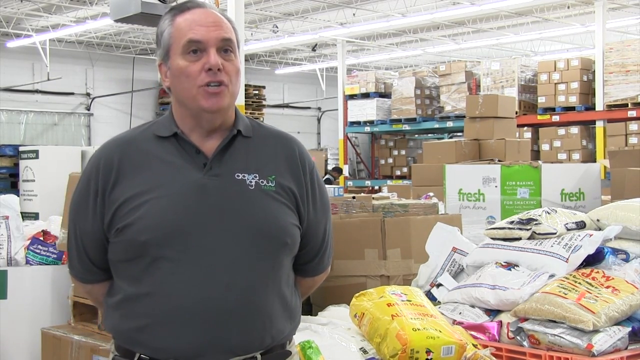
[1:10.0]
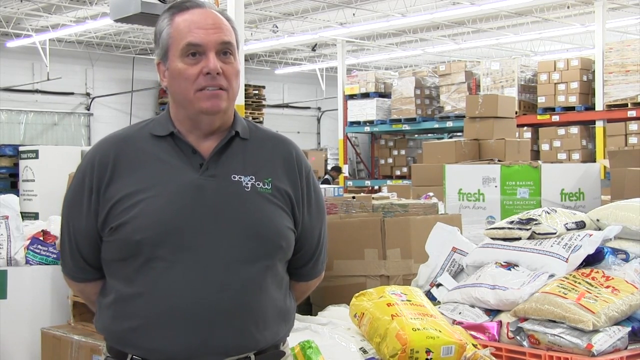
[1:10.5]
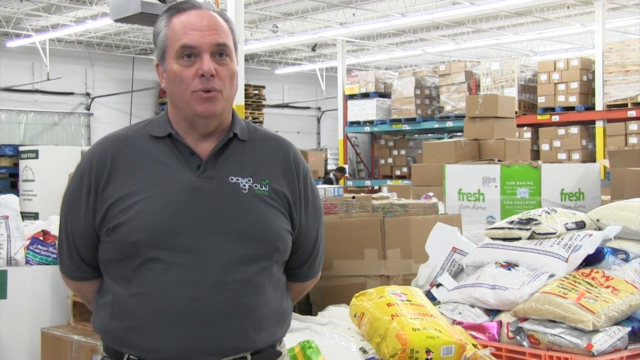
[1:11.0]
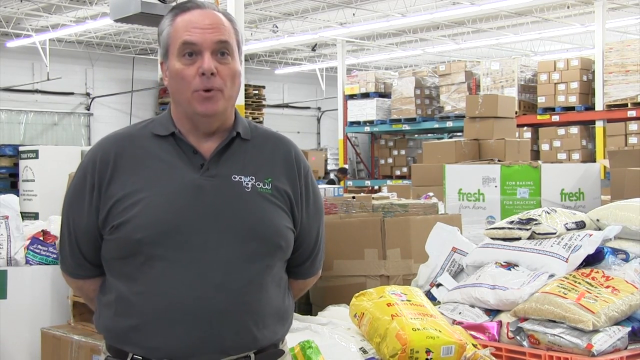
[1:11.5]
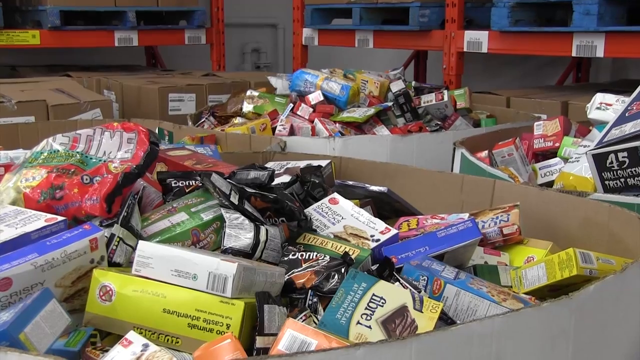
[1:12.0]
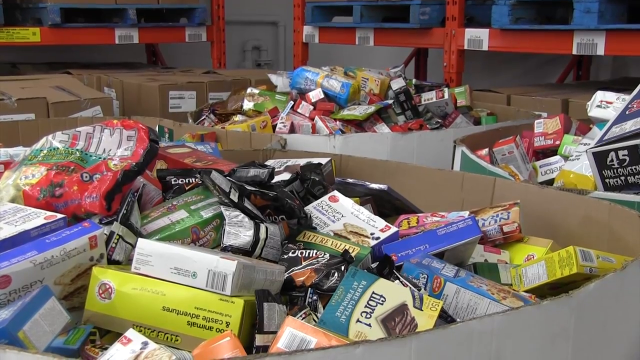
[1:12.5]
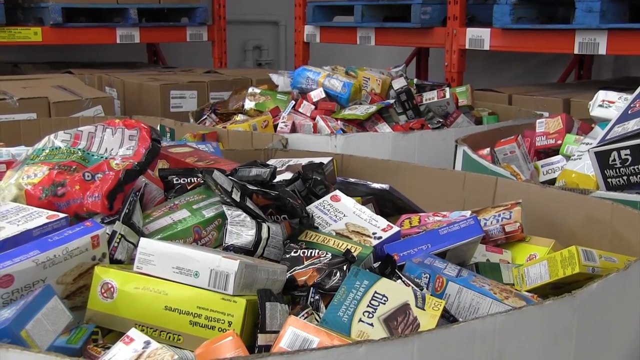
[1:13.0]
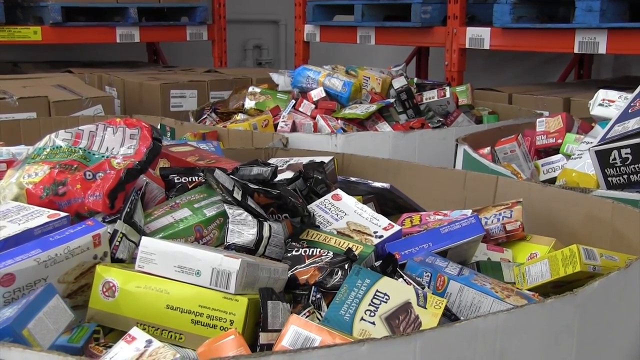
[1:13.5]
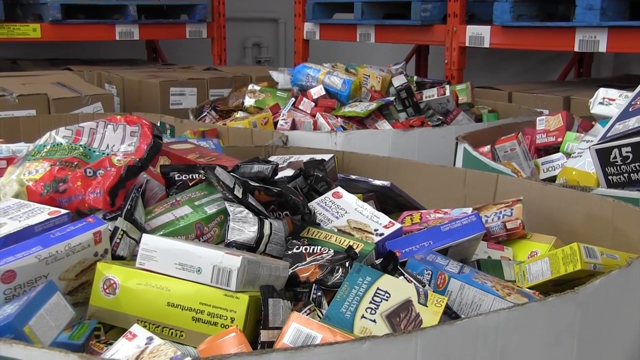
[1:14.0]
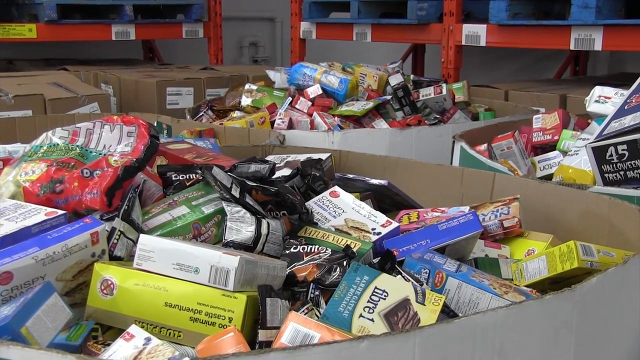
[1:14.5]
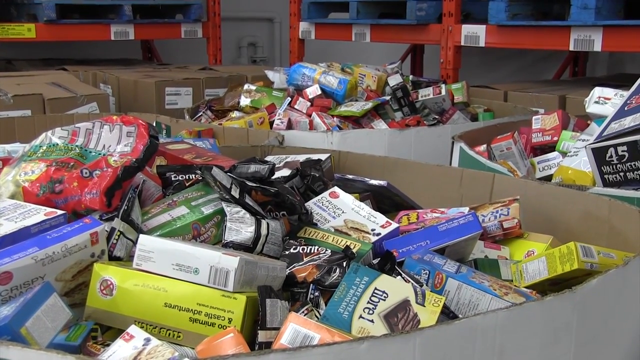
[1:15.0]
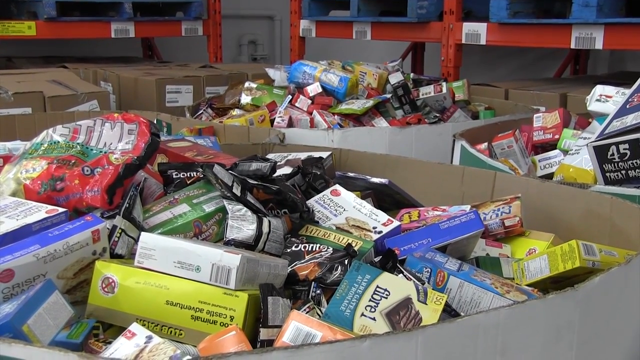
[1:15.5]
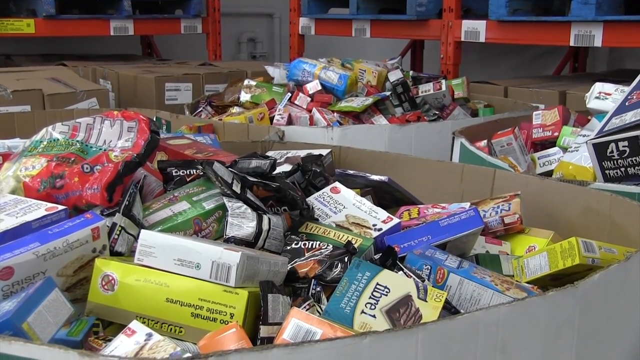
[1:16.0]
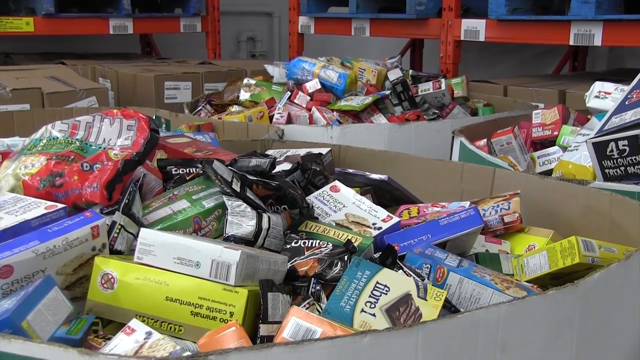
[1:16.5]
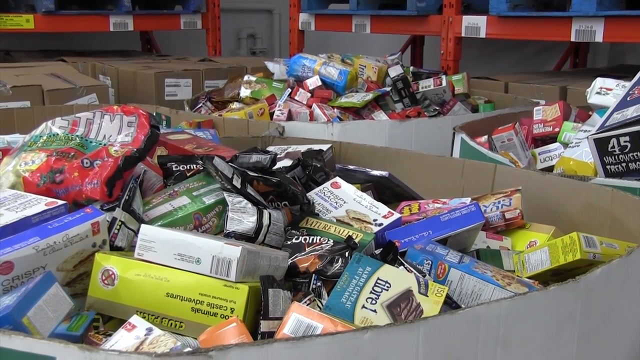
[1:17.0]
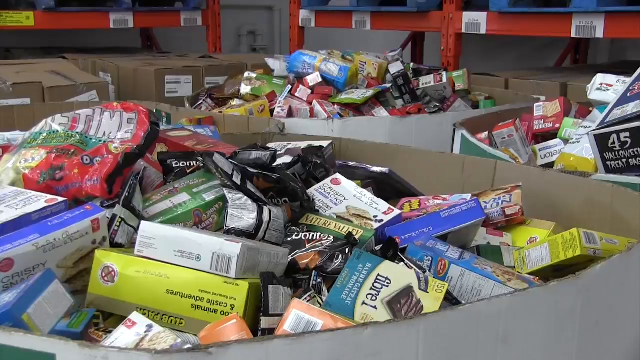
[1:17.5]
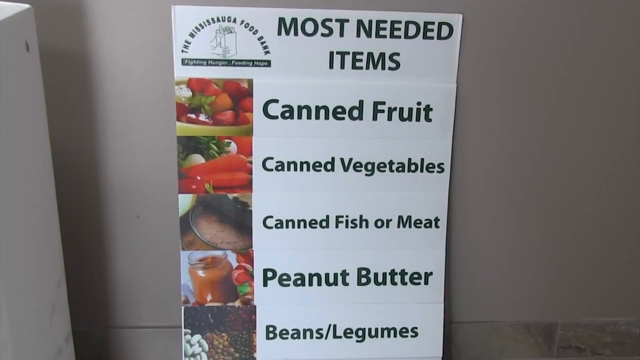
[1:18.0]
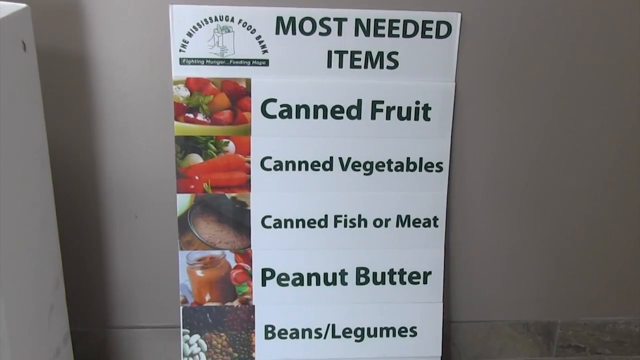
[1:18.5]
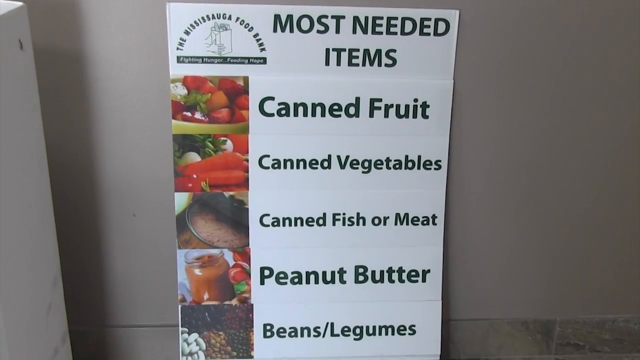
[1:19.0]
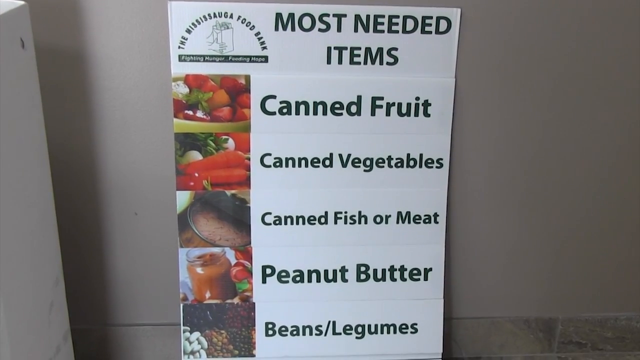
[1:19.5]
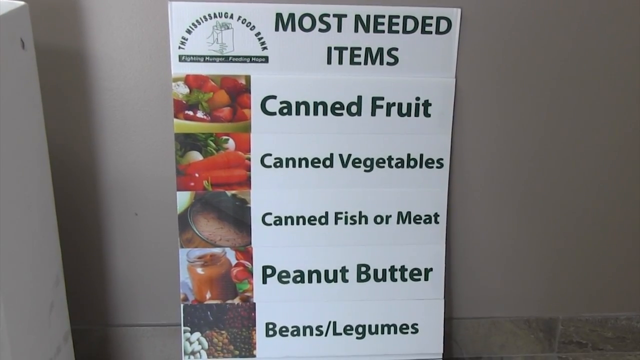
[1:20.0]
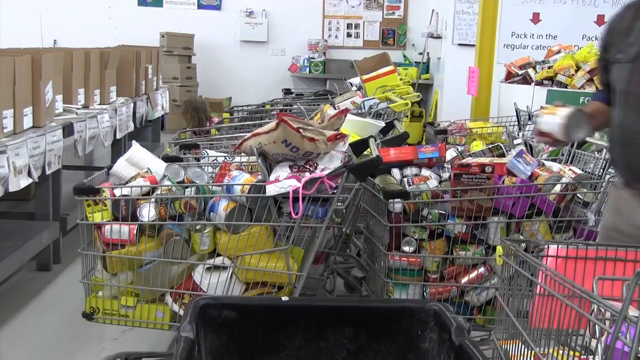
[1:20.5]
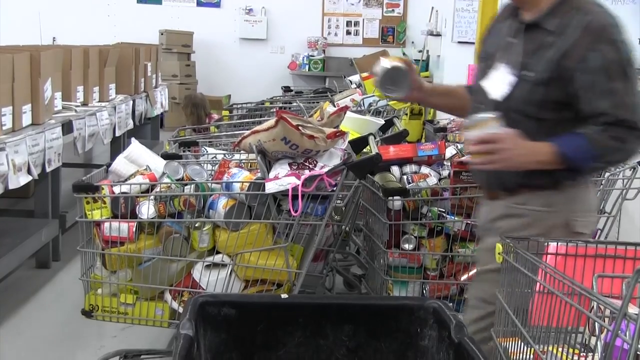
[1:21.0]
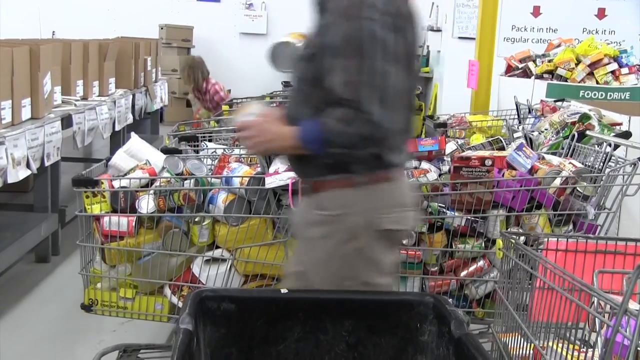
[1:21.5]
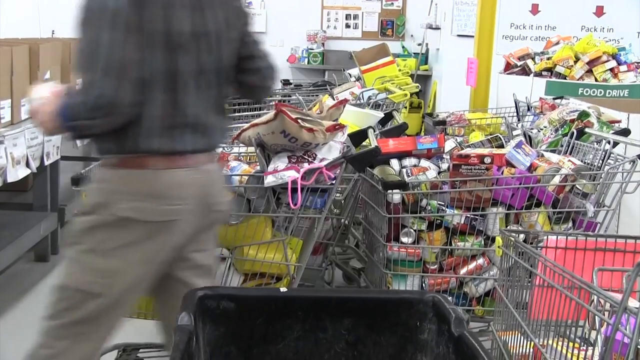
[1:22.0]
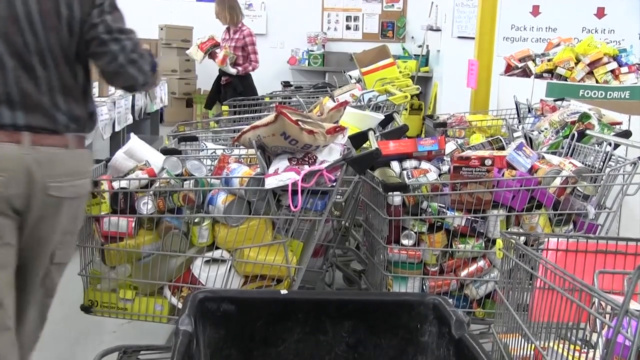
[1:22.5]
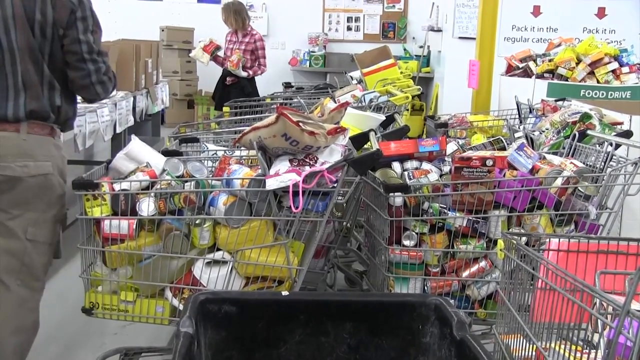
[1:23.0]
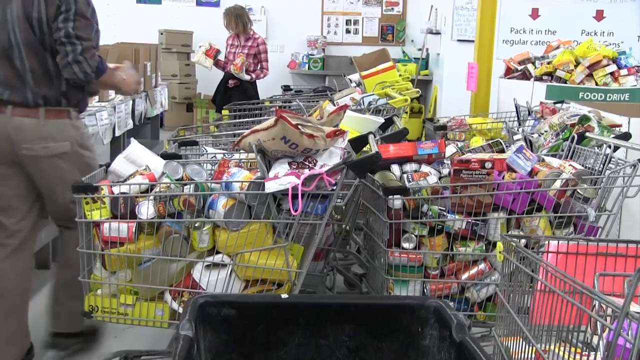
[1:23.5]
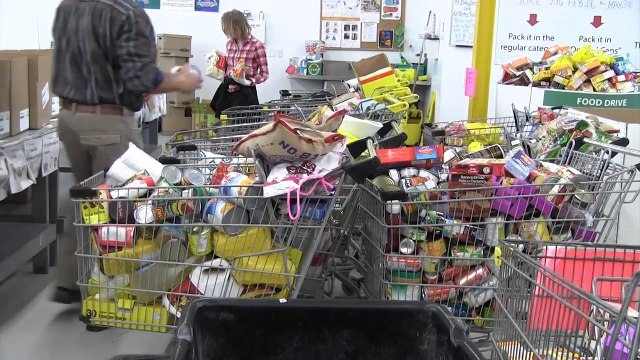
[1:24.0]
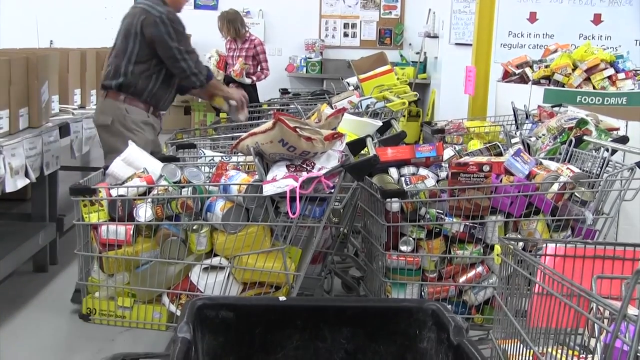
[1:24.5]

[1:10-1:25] The overweight white employee with short gray salt-and-pepper hair and a gray polo shirt talks very earnestly, with various bags and boxes of food in the background. A close-up shows big cardboard produce bins, like those in a store, packed to the brim with boxes and bags of food; most of it appears to be crackers, cereal, granola bars and chips, and possibly some Pop-Tarts. A big rectangular white cardboard sign reads "Most Needed Items", with the Mississauga Food Bank logo in the upper left corner: the name in a semicircle with a photo of a grocery bag. Photos of the items are on the left and the words on the right: "canned fruit, canned vegetables, canned fish or meat, peanut butter, beans, or legumes". A line of shopping carts is packed full of food, much of it canned goods, along with various boxes. On the left is a man in a striped shirt and khaki pants, and in the background a woman in a flannel shirt and black apron sorts donations. Piles of empty boxes are visible, as well as a big bin labeled "Food Drive" packed to the brim with cardboard boxes.